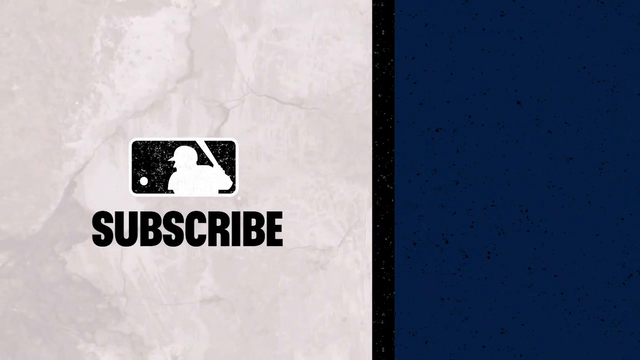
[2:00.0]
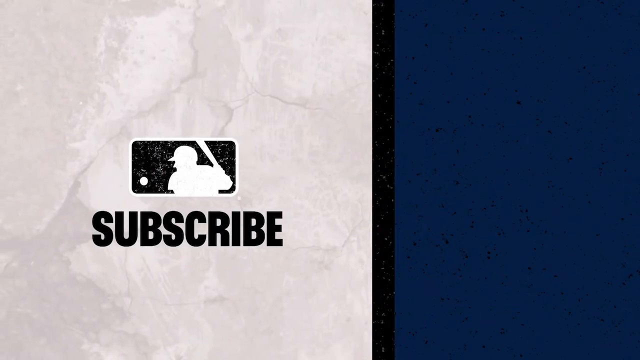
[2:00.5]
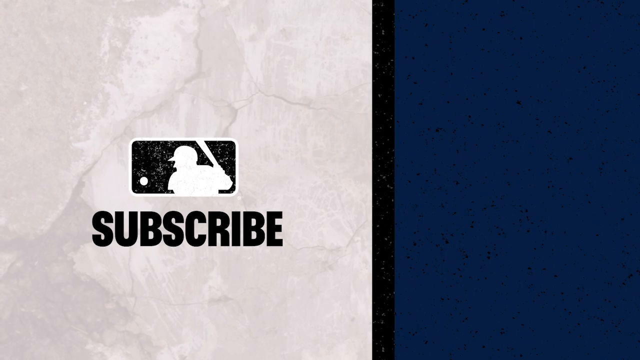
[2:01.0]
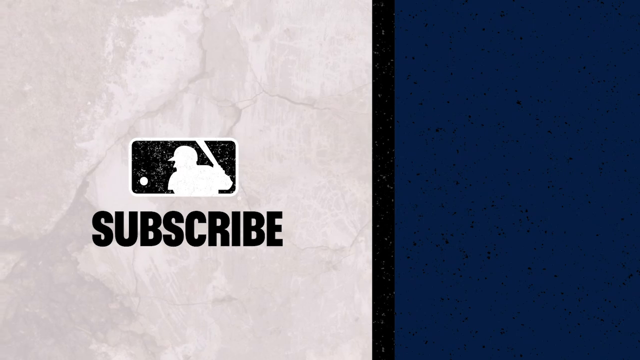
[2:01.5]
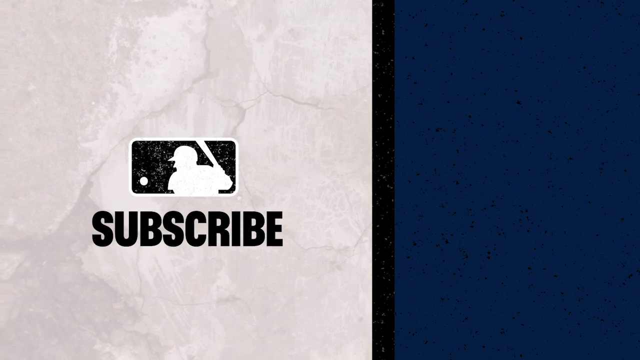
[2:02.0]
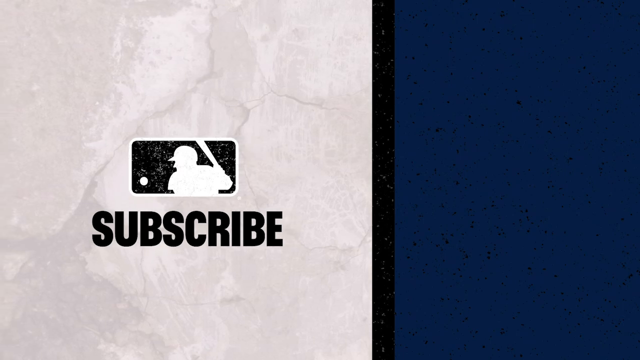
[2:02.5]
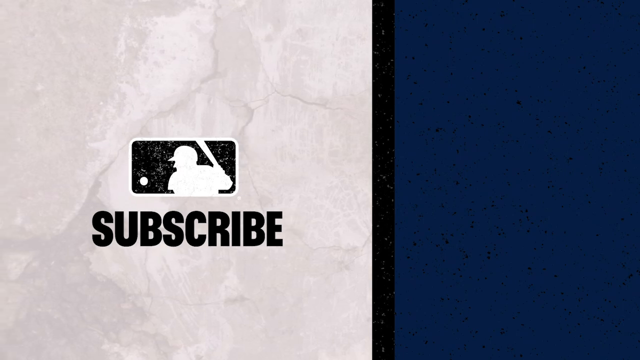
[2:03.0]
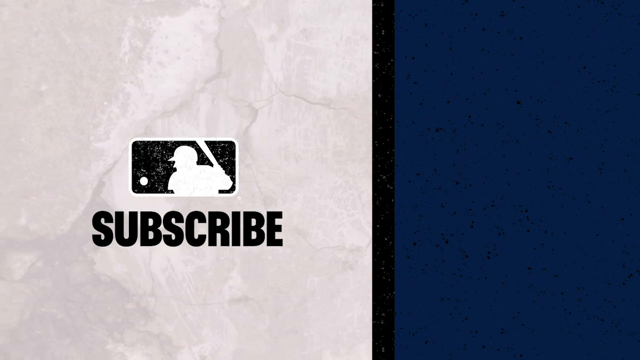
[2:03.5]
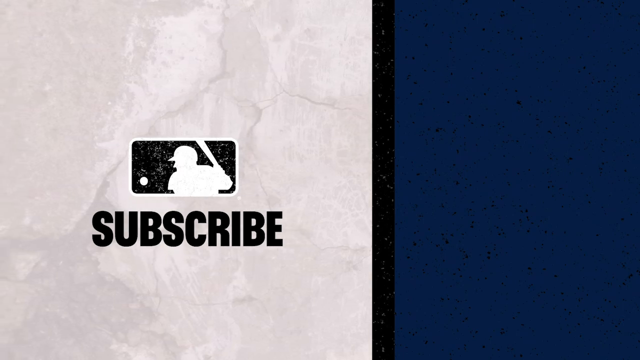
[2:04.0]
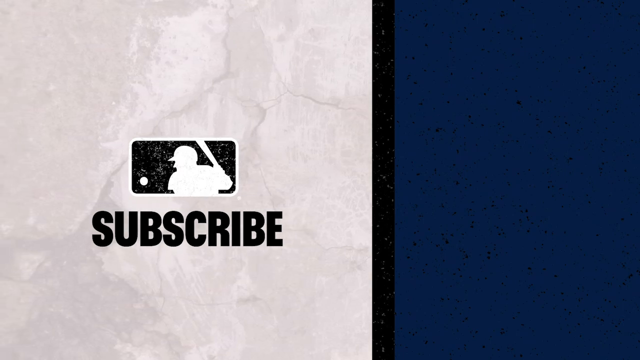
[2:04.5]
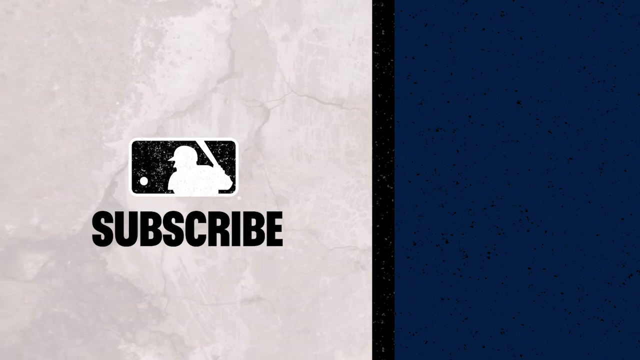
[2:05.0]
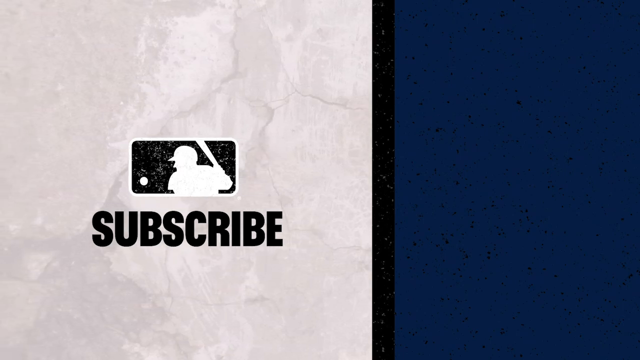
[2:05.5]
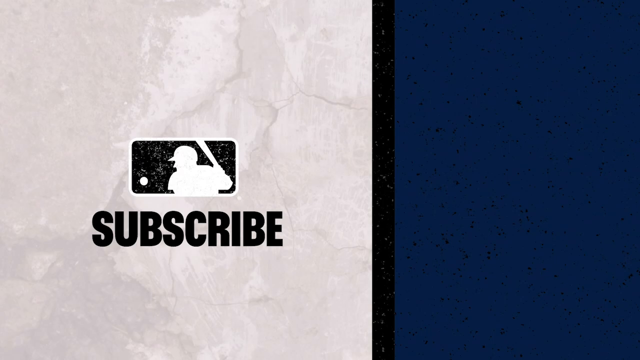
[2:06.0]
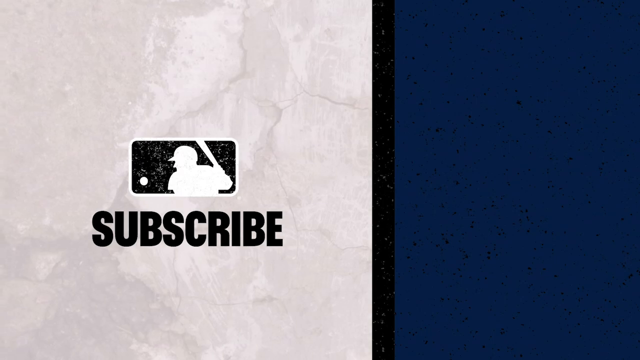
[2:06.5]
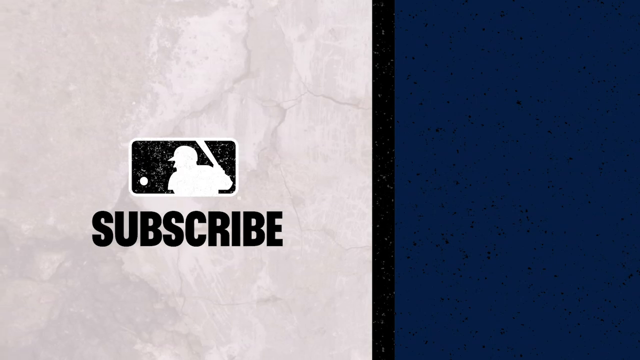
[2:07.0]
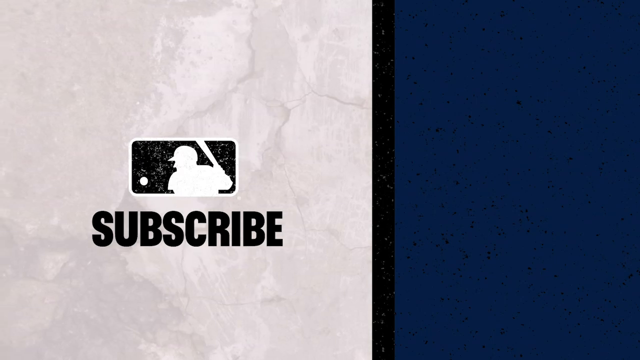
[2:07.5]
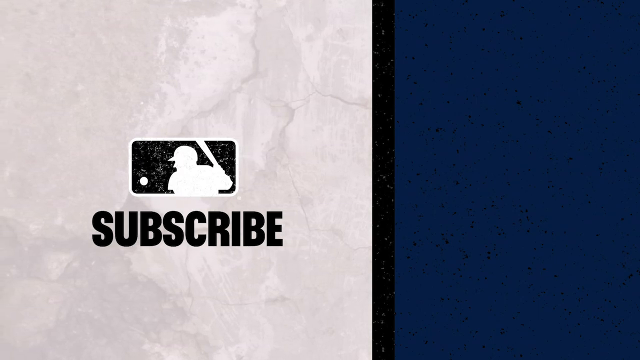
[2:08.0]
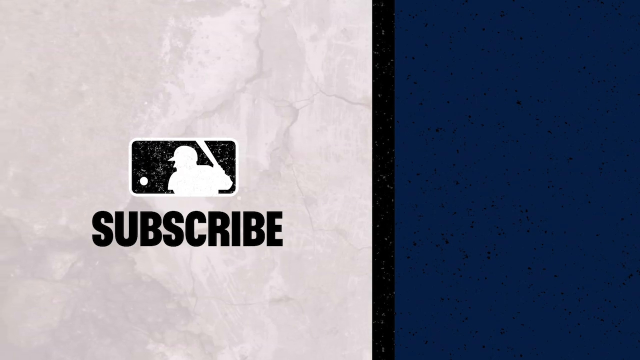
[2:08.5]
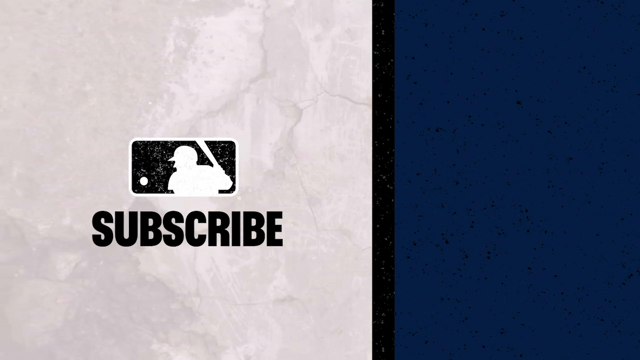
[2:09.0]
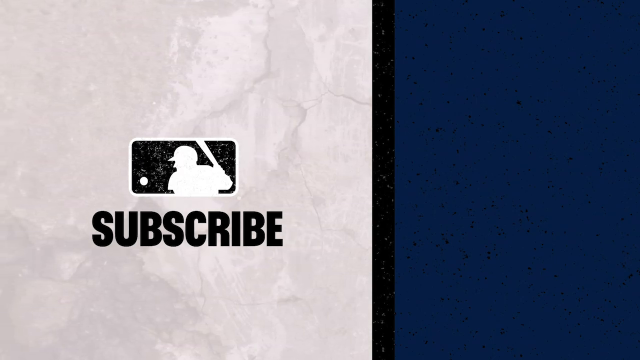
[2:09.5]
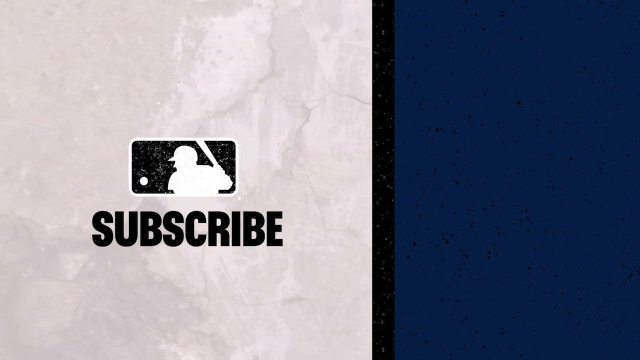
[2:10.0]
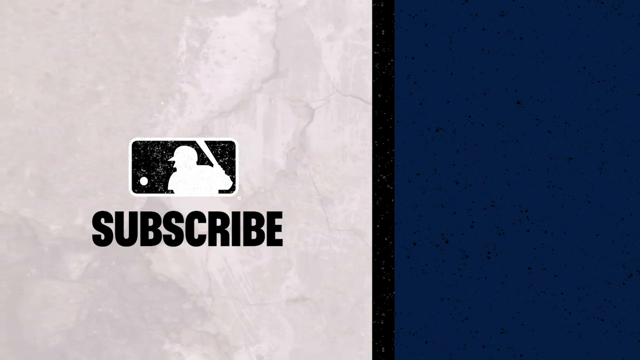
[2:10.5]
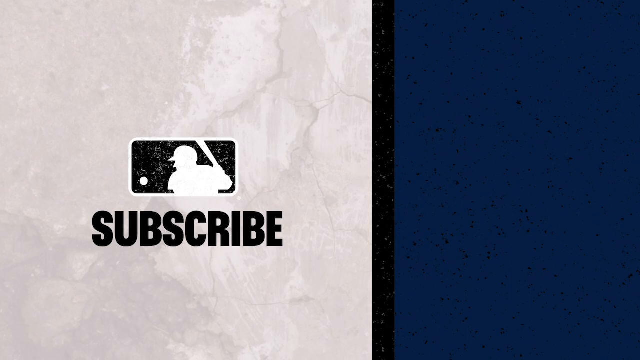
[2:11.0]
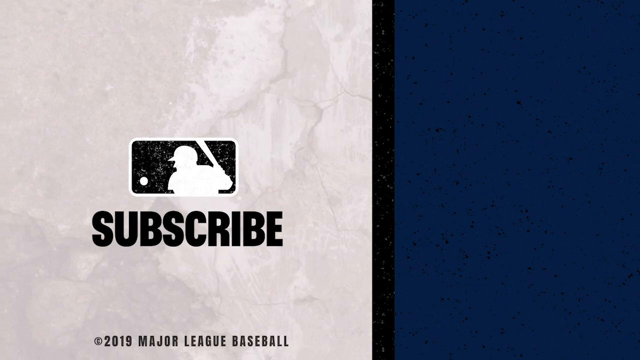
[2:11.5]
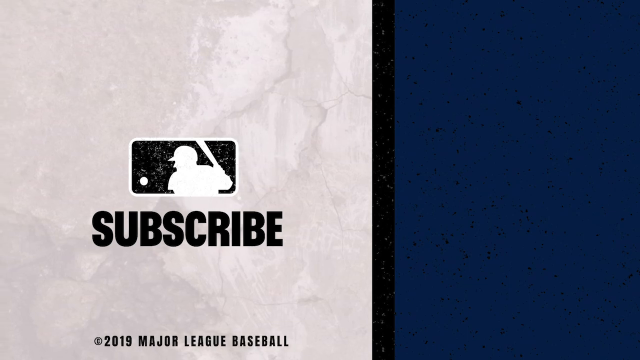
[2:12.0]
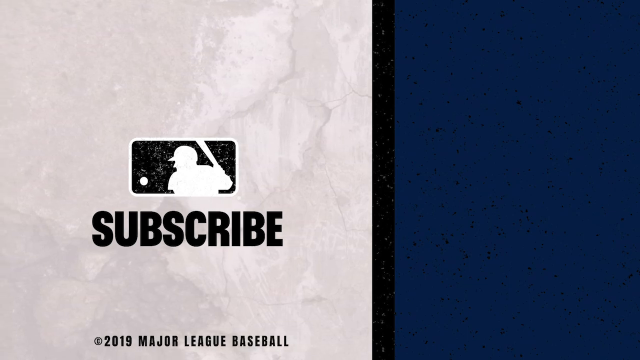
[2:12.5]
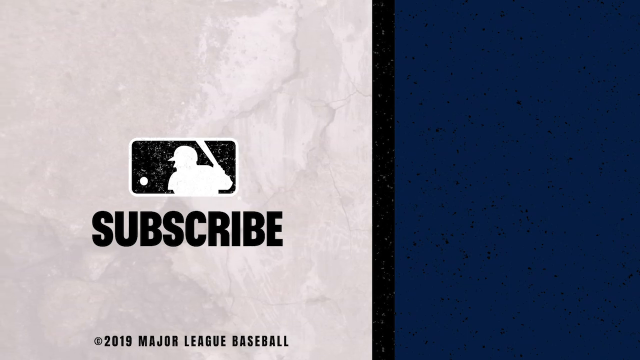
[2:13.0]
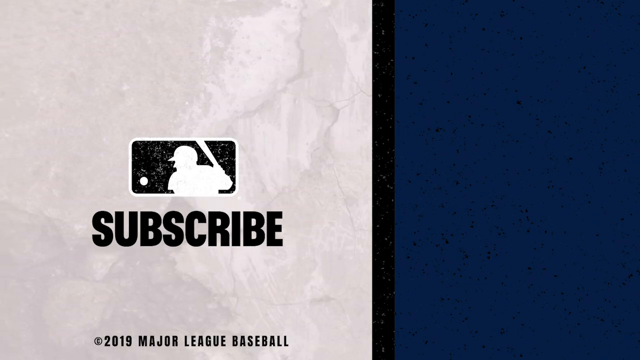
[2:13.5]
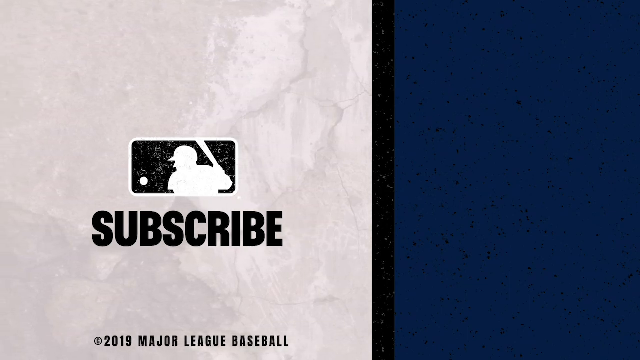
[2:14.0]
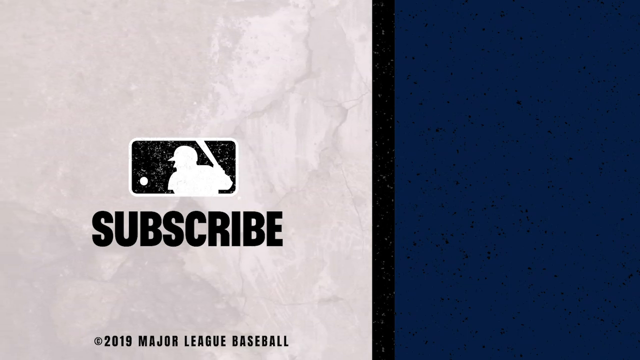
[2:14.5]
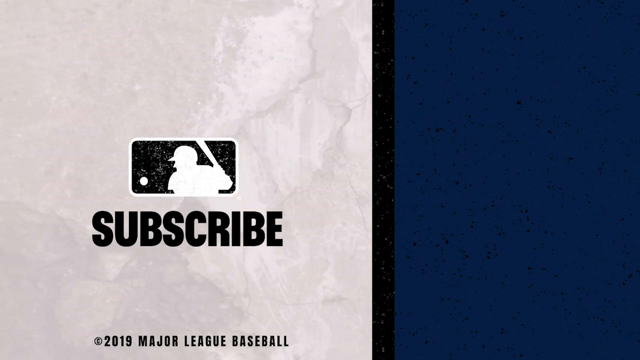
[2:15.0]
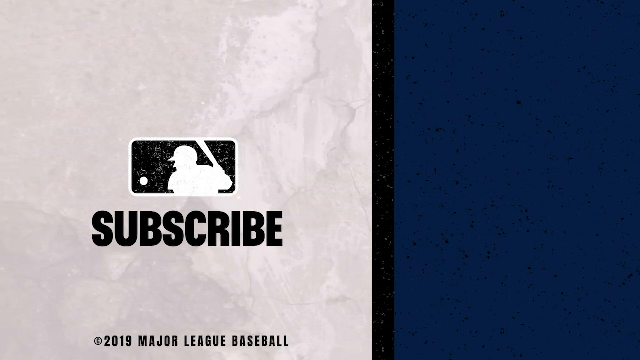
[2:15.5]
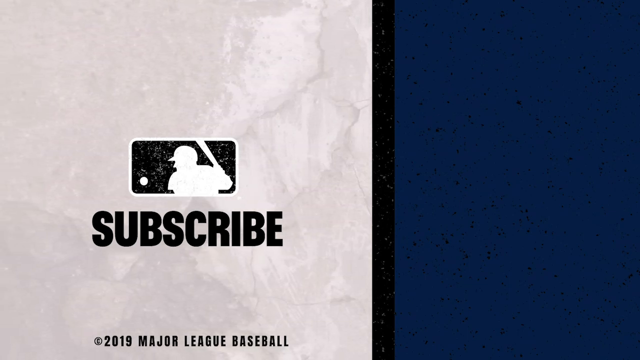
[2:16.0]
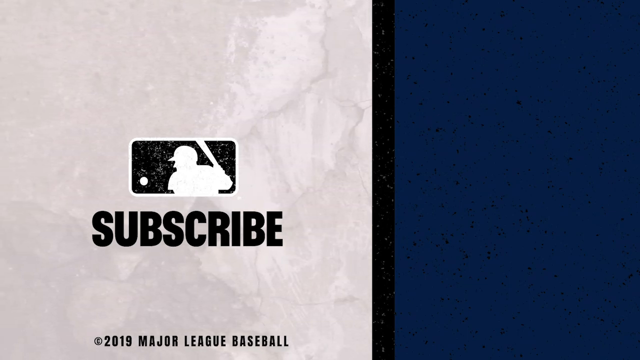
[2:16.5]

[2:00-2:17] The end screen shows "subscribe" with a baseball logo: a white silhouette of a person holding a bat in one hand behind him as if he is going to hit the ball, with blue and red behind him, all in a white circle. This is on a mottled gray background that looks like gray marble tile or flooring, moving from left to right. Below the logo, "subscribe" appears in black, all in the center. The logo is Major League Baseball's. At the very end, "2019 copyright Major League Baseball" appears in black below it.